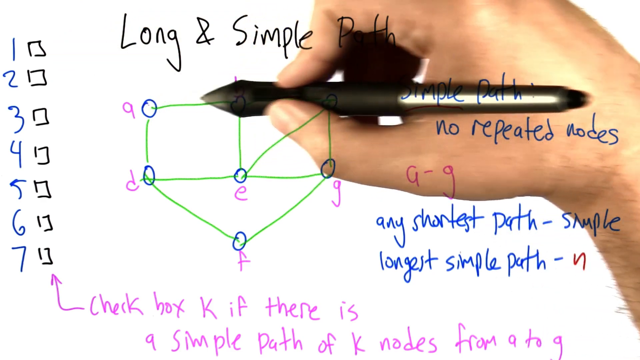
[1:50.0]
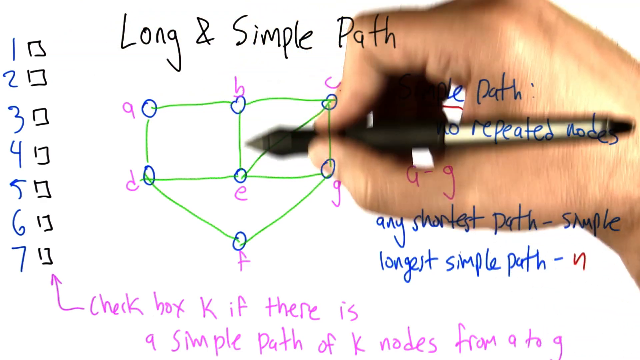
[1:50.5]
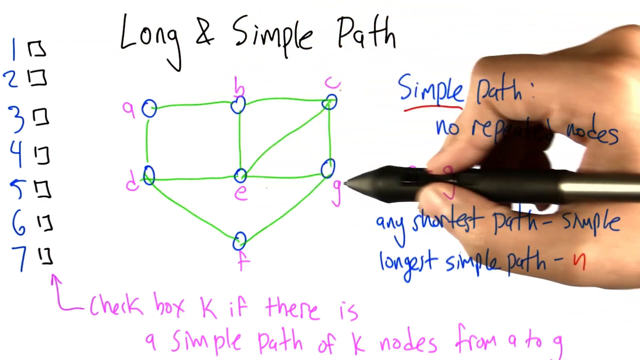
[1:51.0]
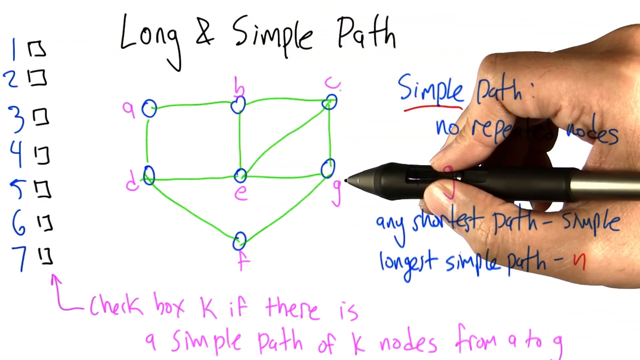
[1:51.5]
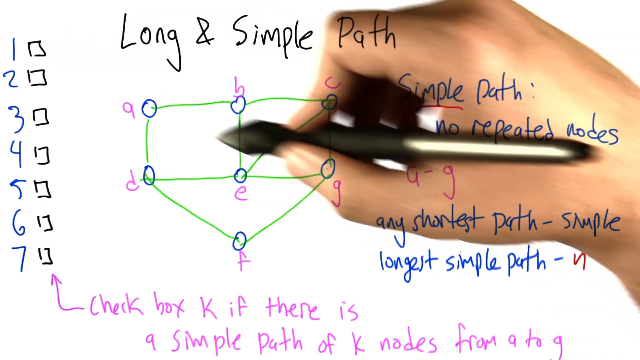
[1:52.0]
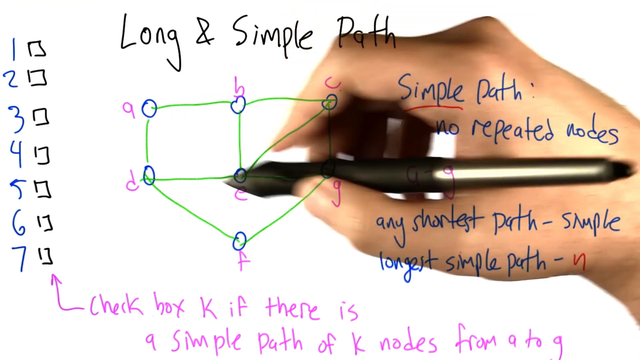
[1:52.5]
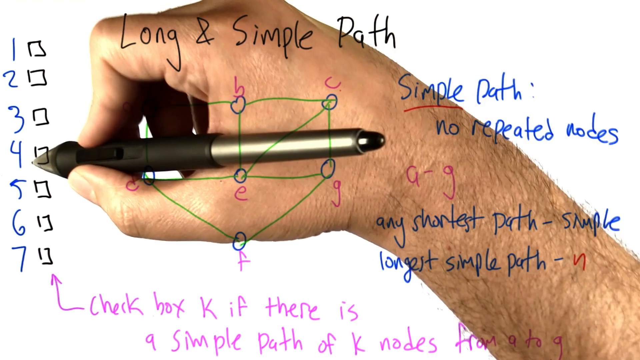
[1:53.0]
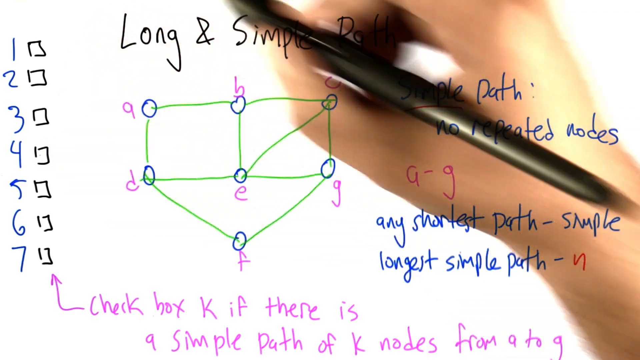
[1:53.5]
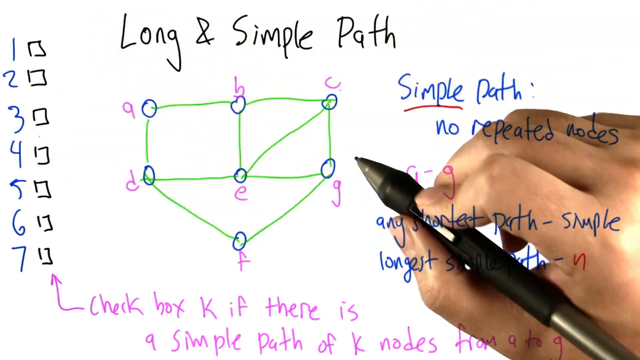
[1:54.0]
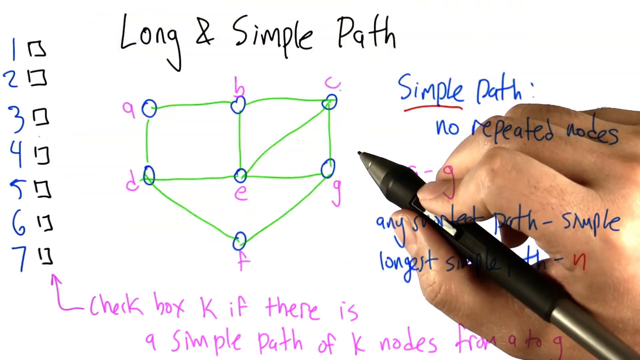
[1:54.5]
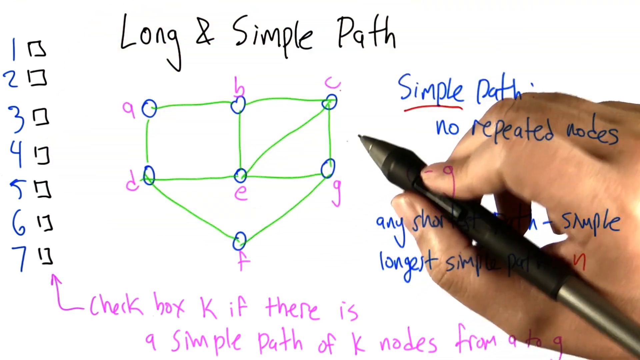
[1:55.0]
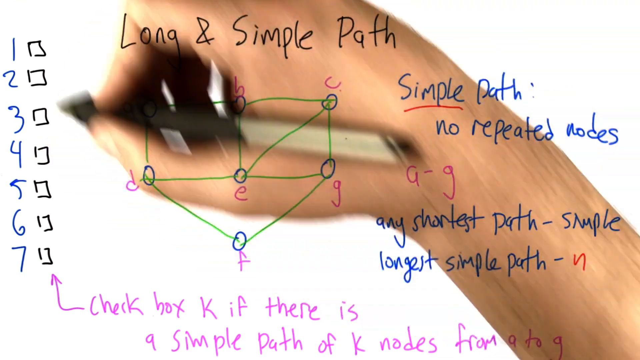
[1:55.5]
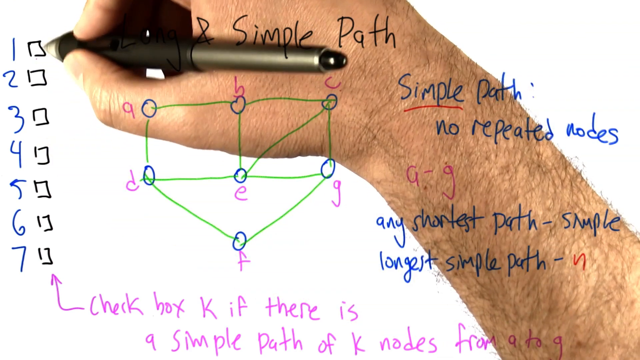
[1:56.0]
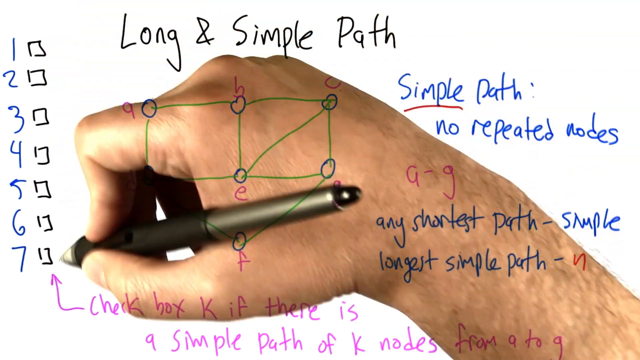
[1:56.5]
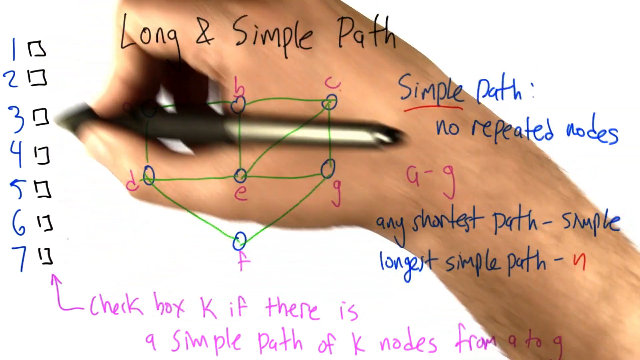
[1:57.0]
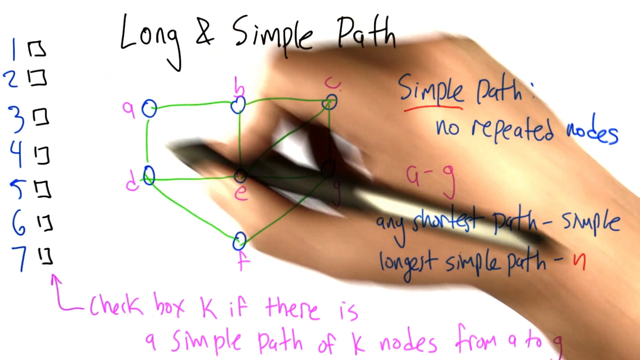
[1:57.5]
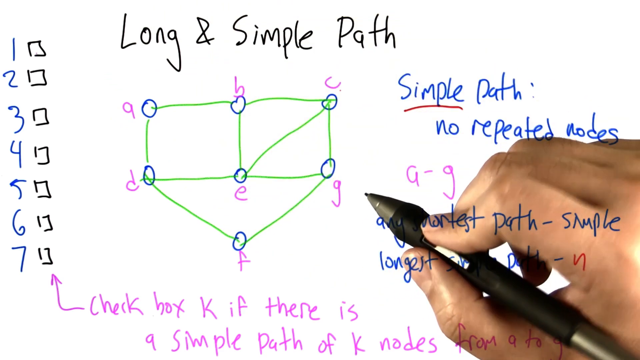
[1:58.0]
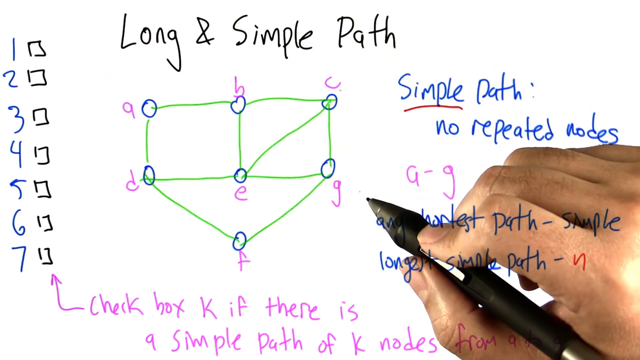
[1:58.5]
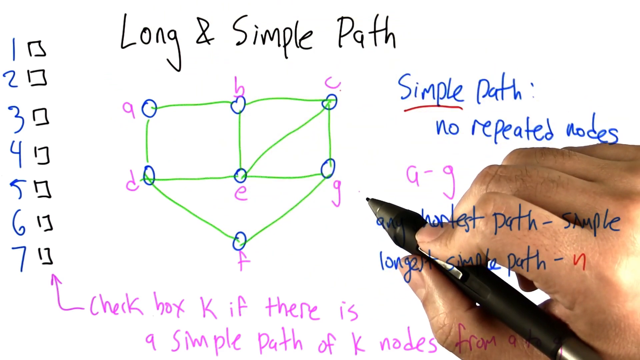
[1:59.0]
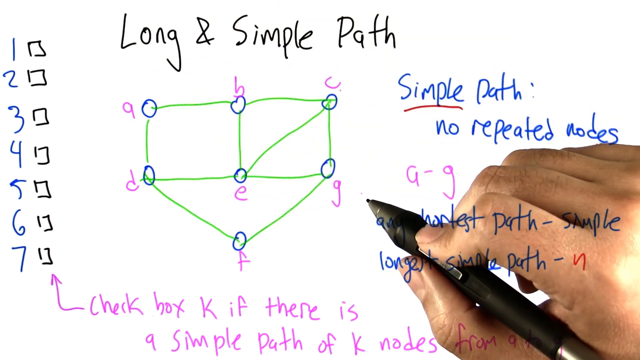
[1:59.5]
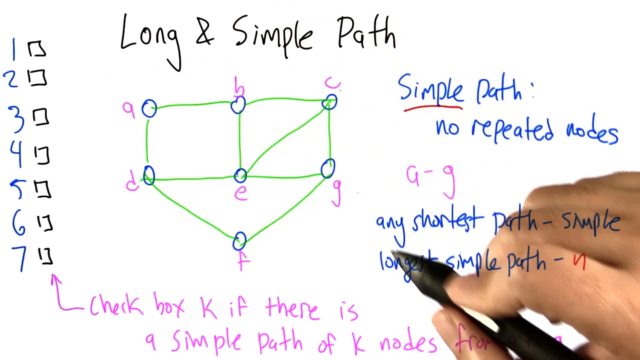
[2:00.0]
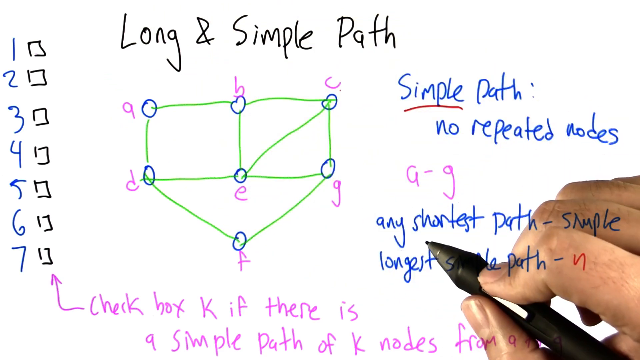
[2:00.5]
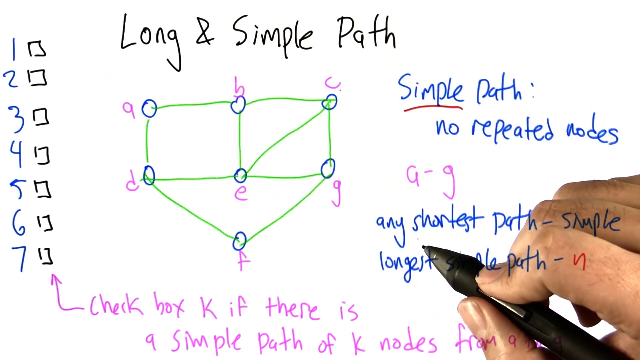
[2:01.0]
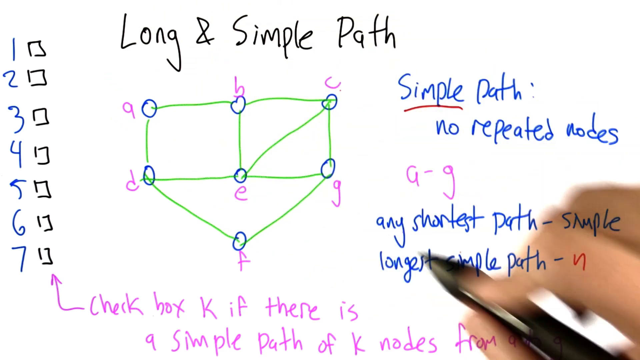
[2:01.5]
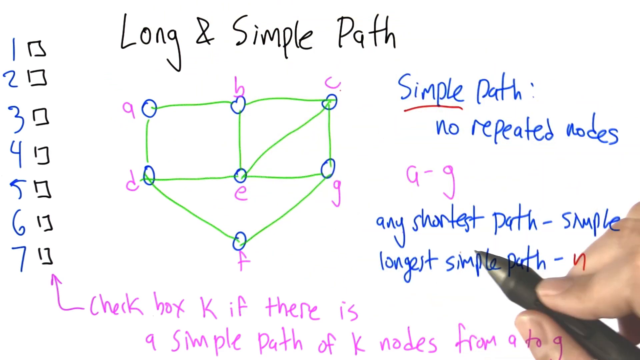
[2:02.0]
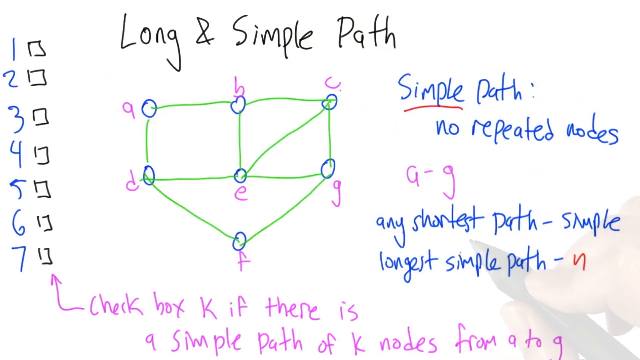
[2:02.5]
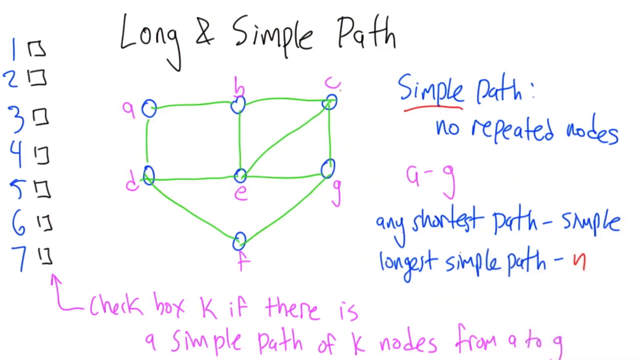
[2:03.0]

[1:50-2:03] A man's hand holds a pen and writes on a white piece of paper. The pen looks like it produces different colours, including red, blue and black, matching the colours on the page. Only the hand moves. The text reads "check the box K if there is a simple path of K nodes," and seven boxes are listed down the page, written by the hand, apparently as part of working through the simple path problem.